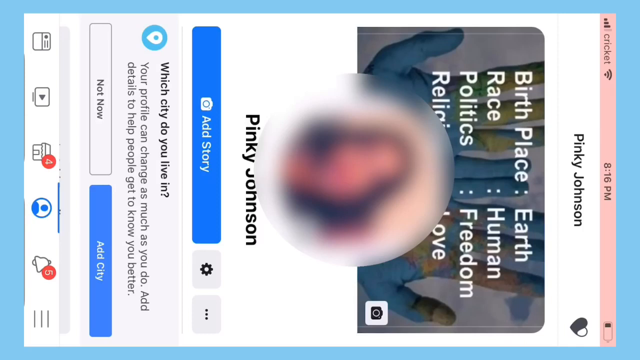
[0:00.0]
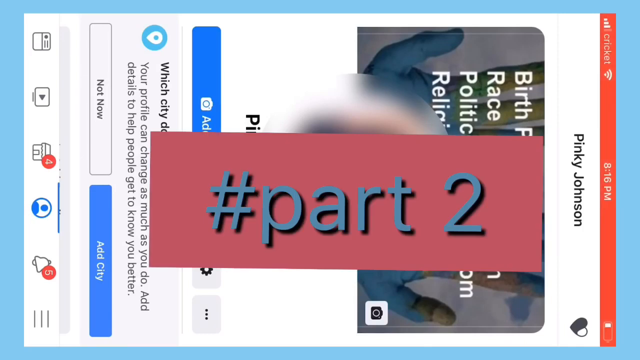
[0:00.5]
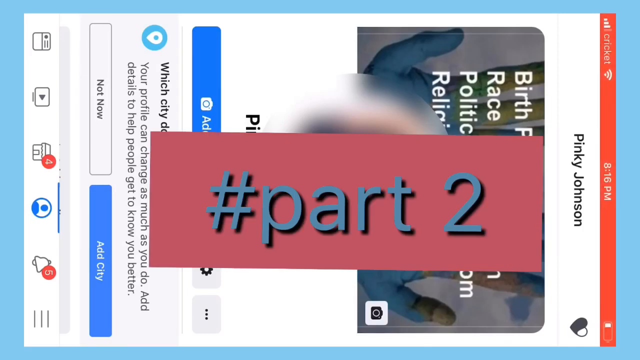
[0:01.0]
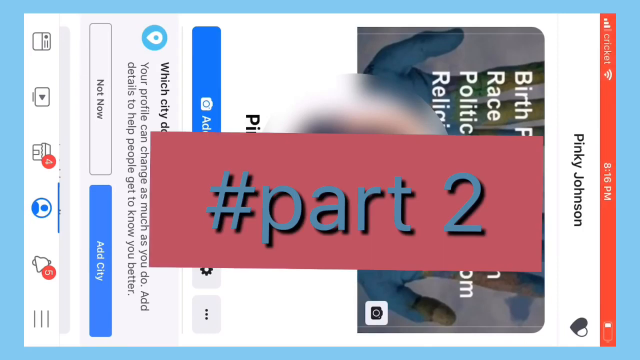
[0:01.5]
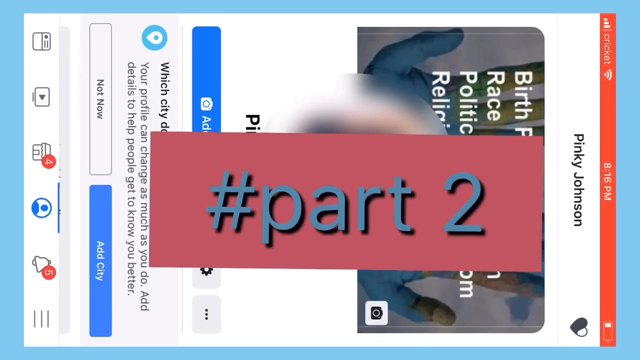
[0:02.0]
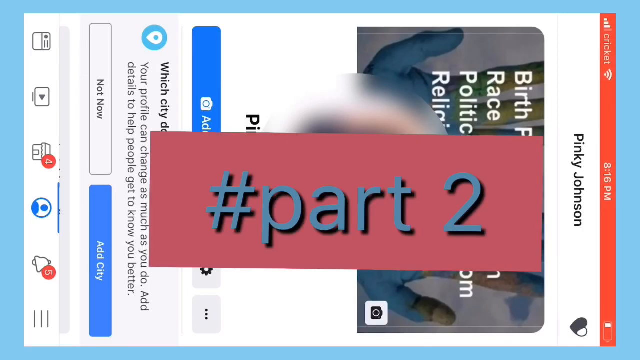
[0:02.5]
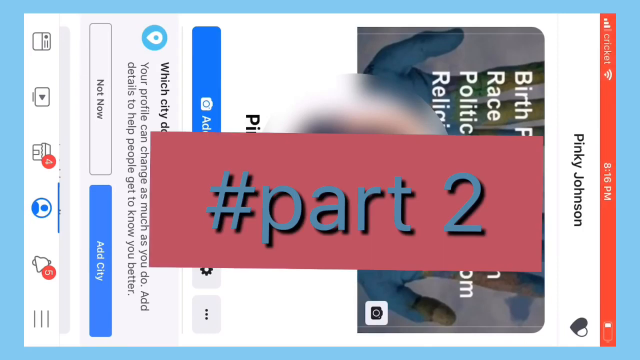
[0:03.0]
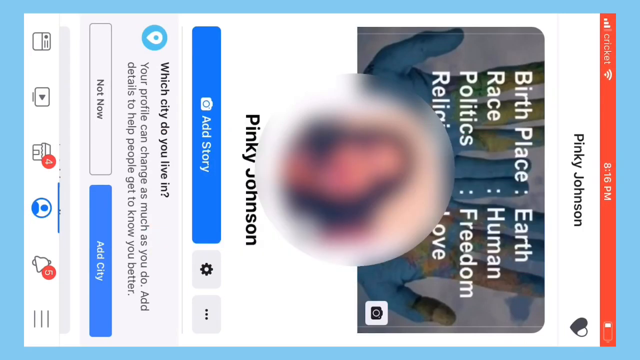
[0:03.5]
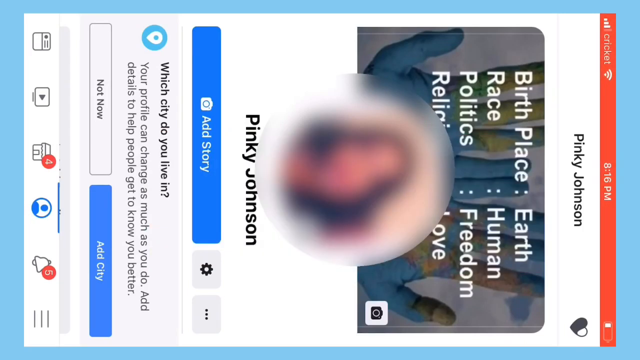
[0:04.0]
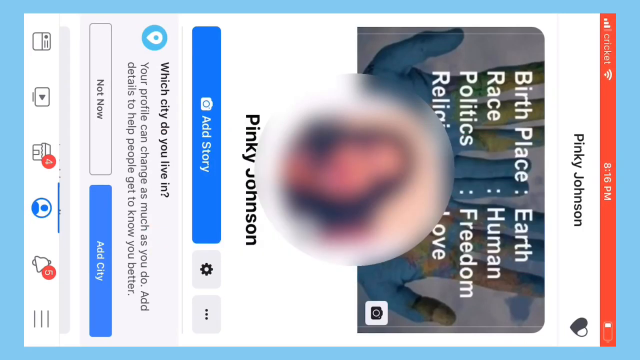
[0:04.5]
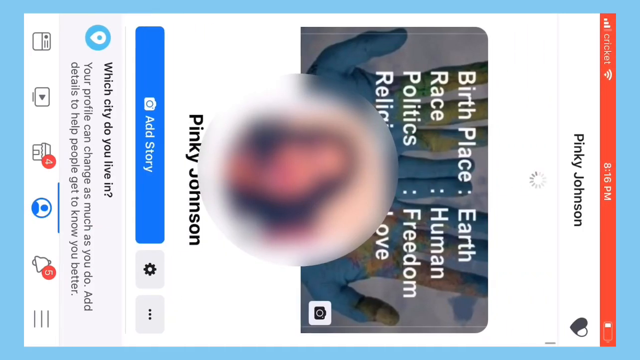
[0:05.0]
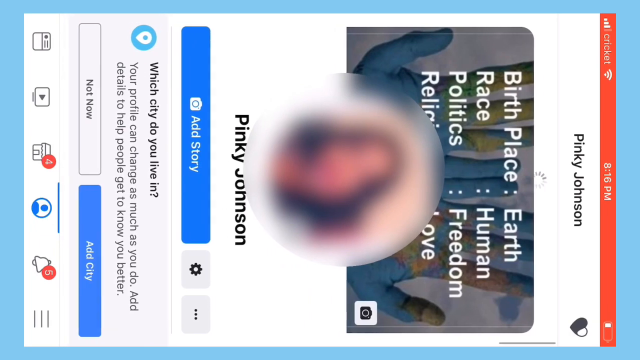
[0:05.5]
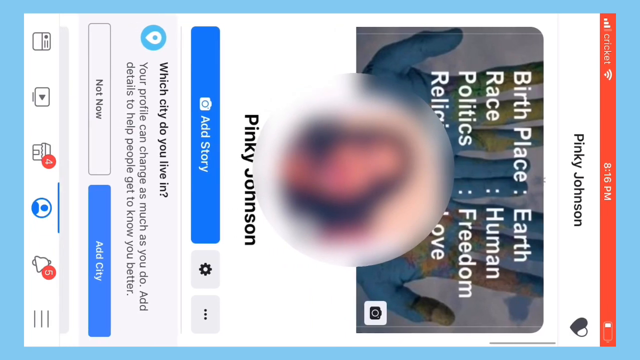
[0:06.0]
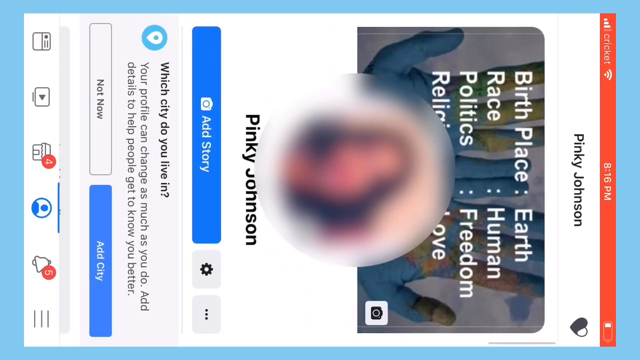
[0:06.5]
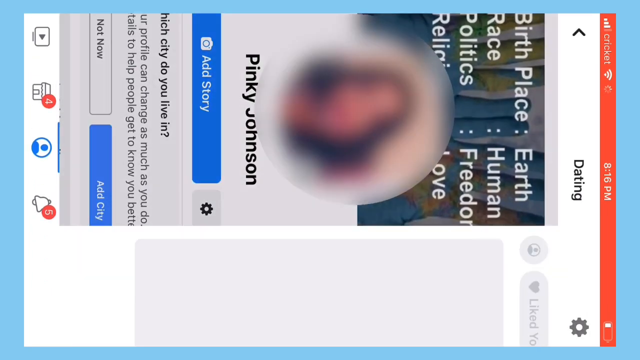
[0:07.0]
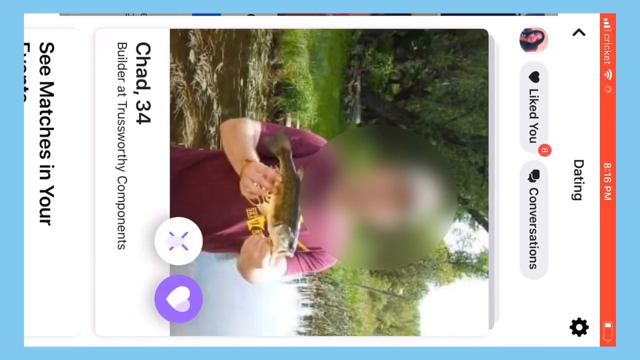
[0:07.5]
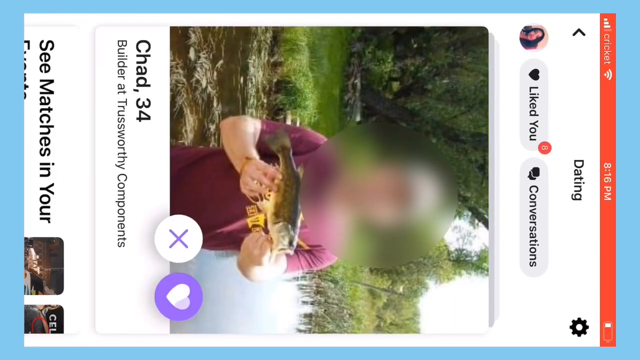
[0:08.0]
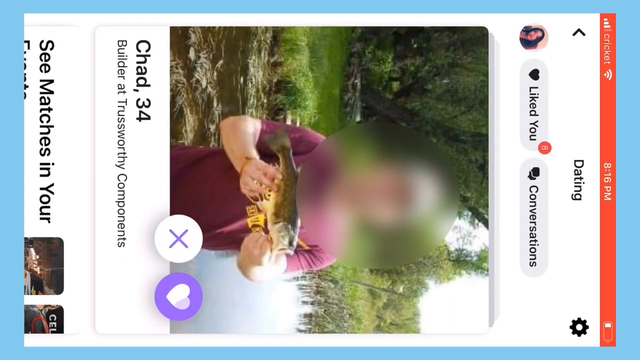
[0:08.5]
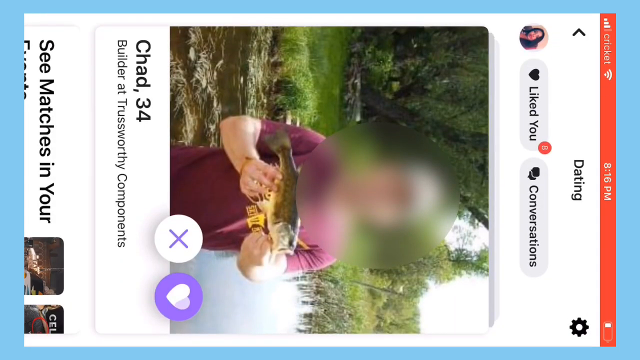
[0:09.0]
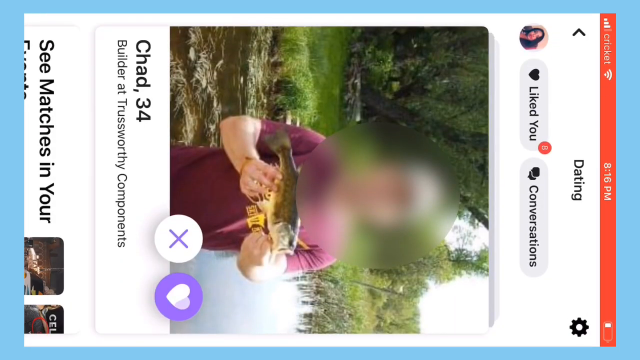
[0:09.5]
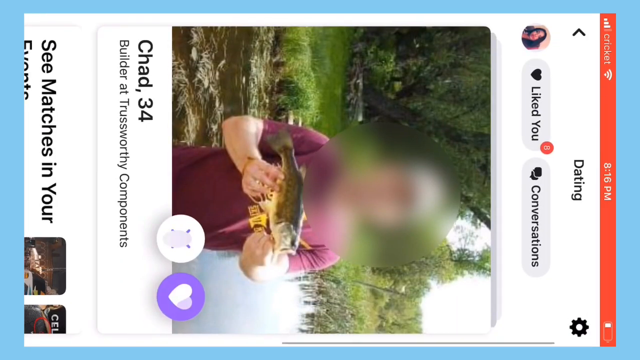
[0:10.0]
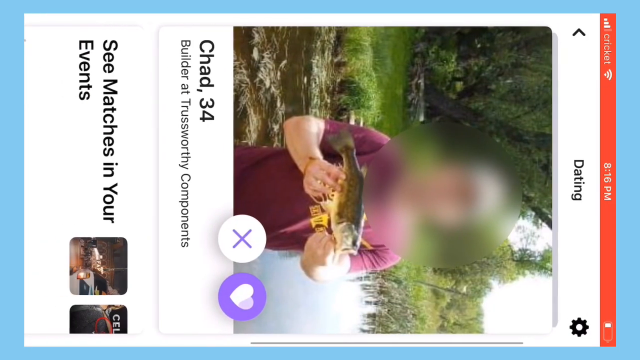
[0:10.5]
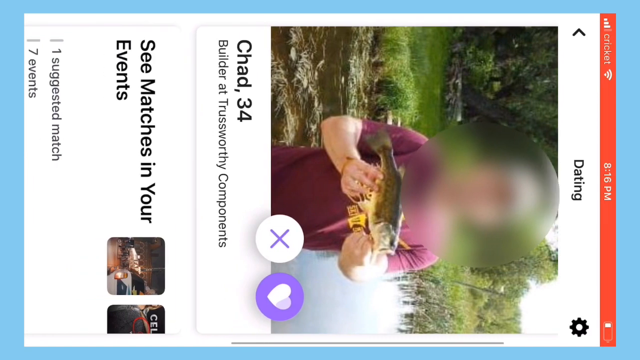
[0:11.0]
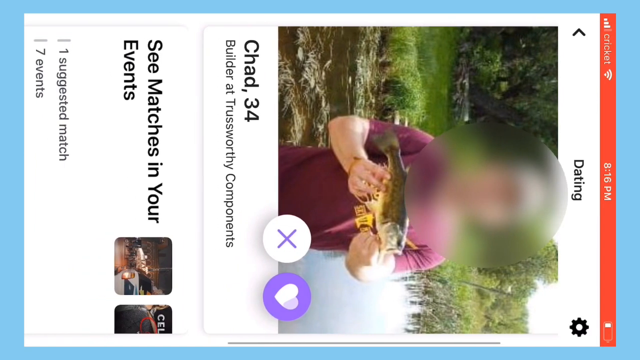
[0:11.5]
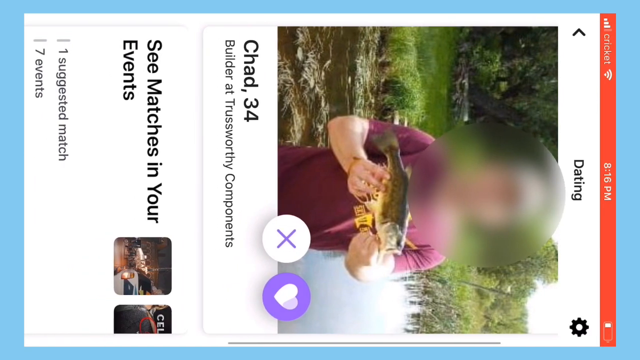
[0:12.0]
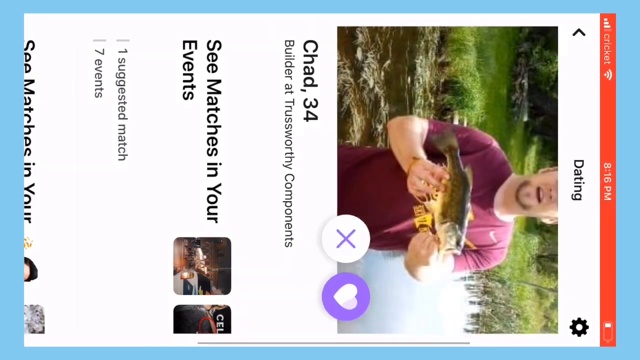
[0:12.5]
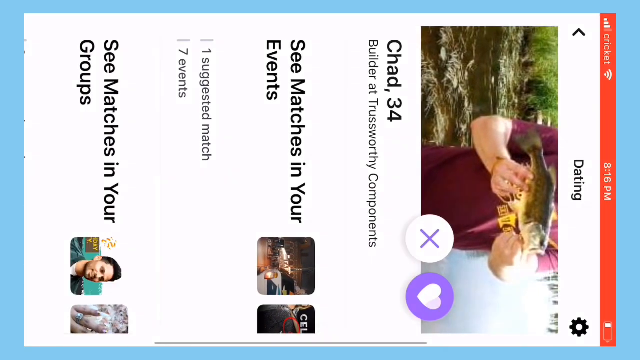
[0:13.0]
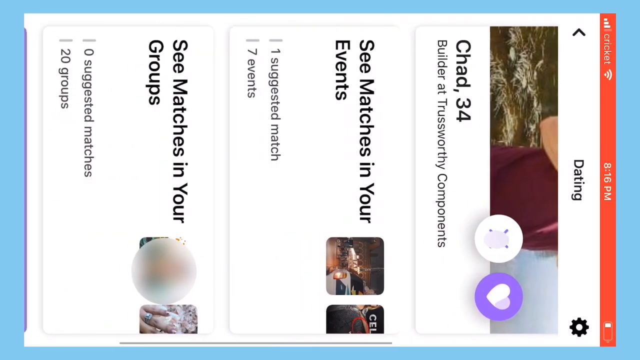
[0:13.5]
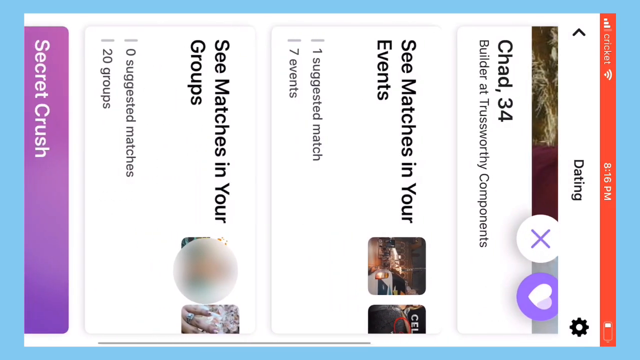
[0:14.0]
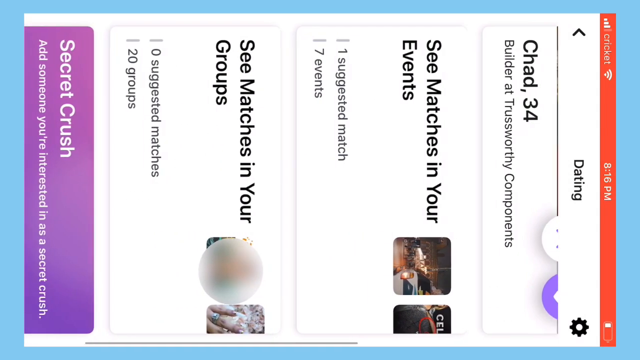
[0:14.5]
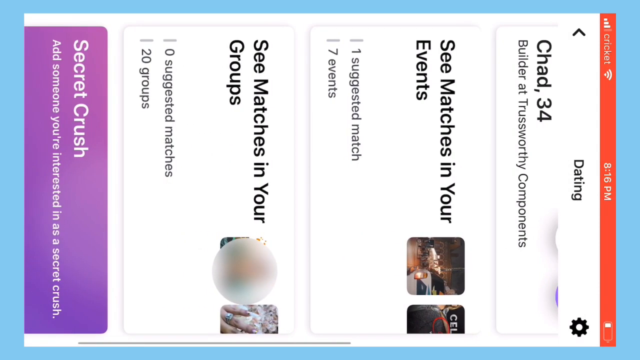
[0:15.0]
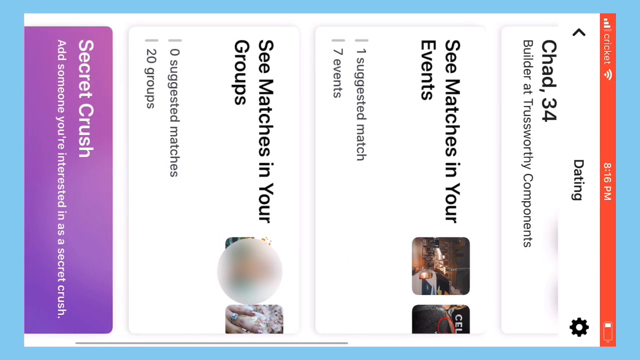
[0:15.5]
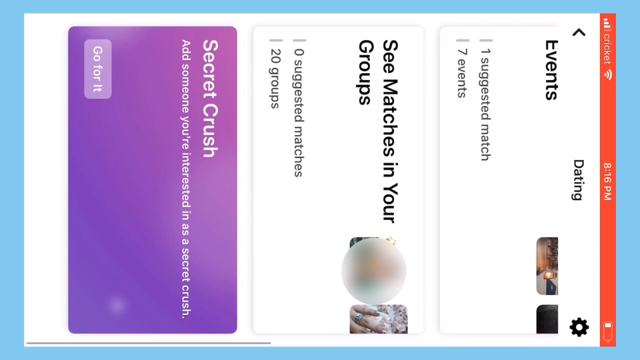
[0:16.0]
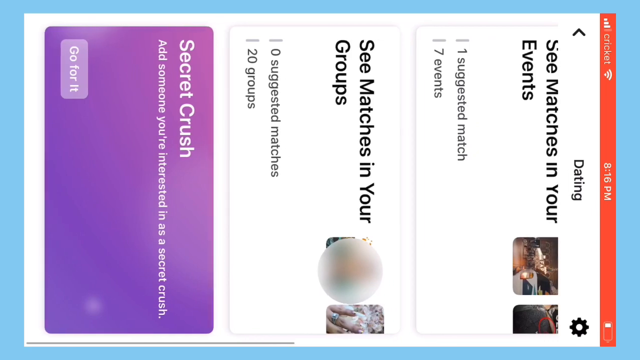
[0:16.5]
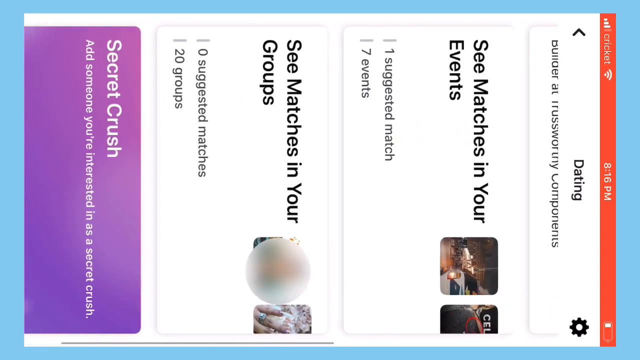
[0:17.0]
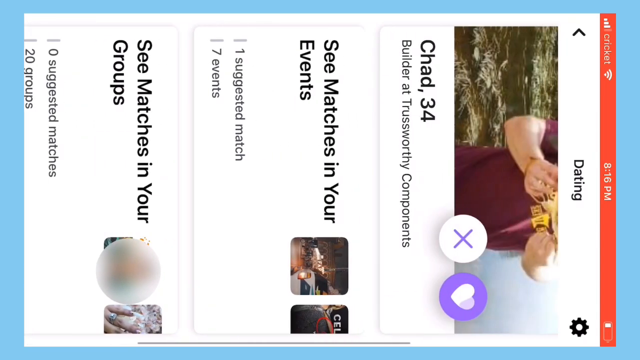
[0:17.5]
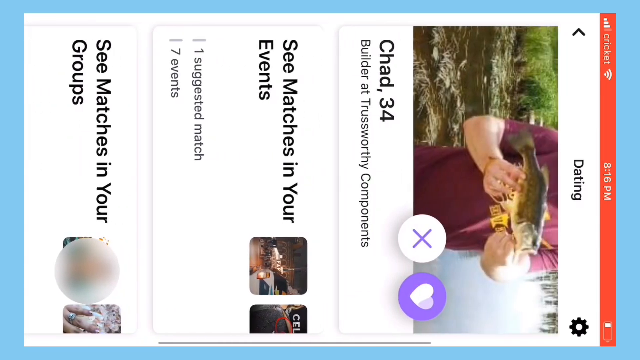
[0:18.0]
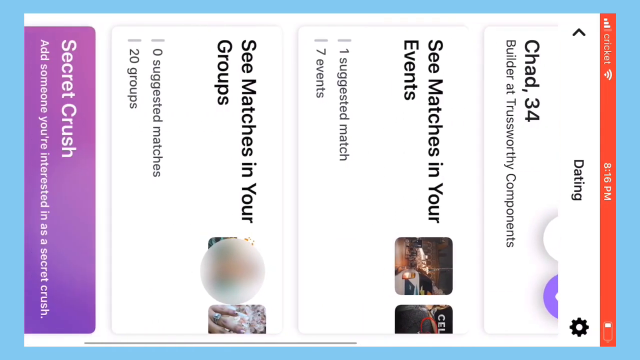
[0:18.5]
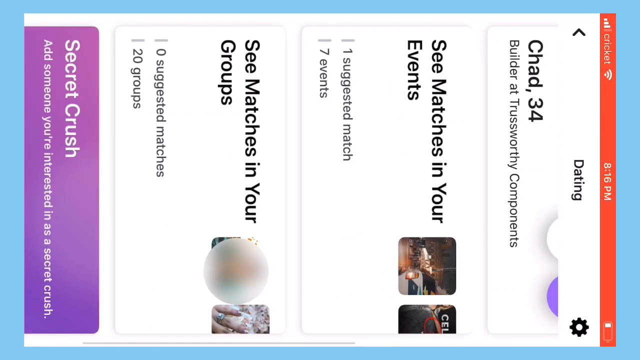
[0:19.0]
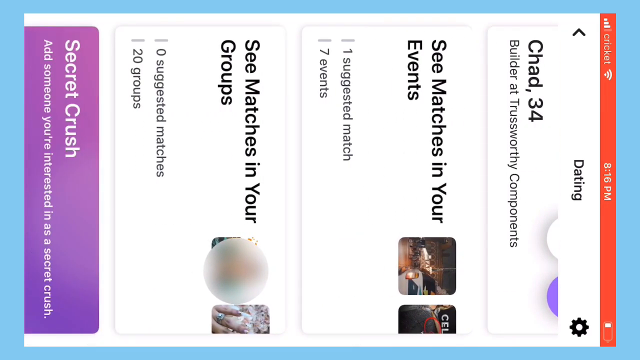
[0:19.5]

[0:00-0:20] The video shows a phone screen grab of some kind of social media website, angled so that it reads from right to left, with the right side being the top. The page is a social media profile for Pinky Johnson, reading "birthplace, earth, race, human, politics, freedom, religion, love." A blurred-out, circular profile picture appears, followed by the name Pinky Johnson again, various circular social media buttons, and a UI at the bottom. A salmon-colored banner with blue text reading "#part two" is imposed in the center of the screen, and a picture of the phone screen is on the left. The banner disappears, and the screen swipes from bottom to top to another social media page.